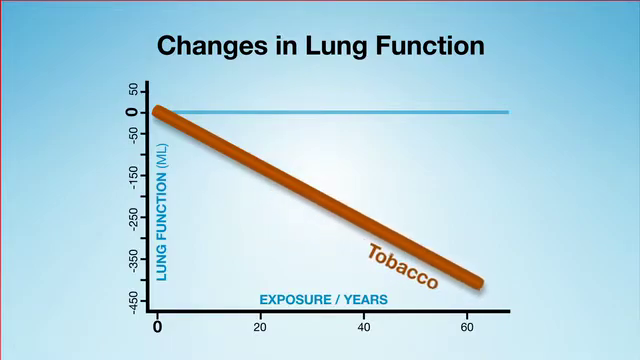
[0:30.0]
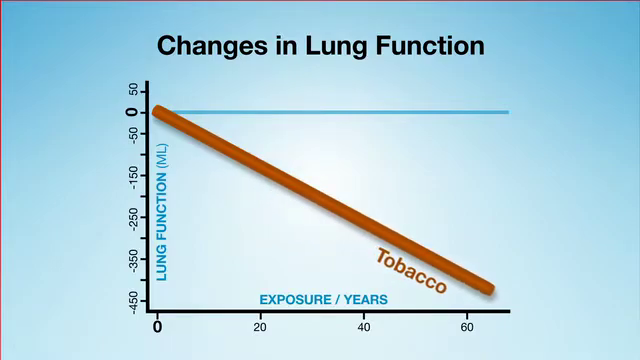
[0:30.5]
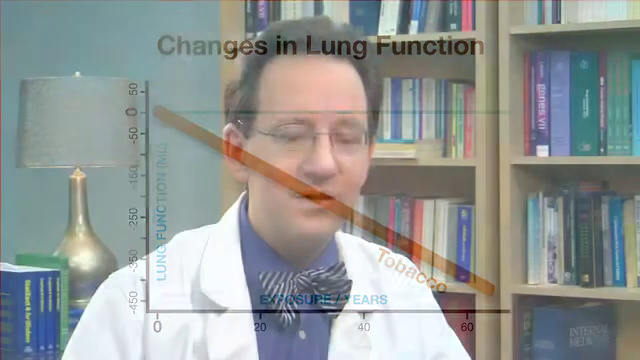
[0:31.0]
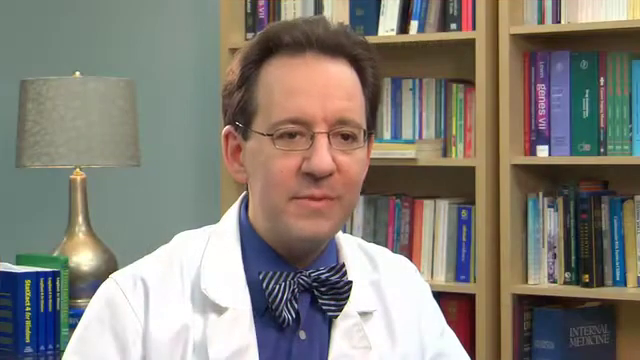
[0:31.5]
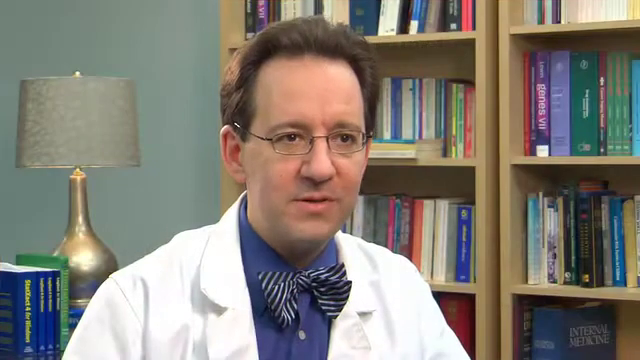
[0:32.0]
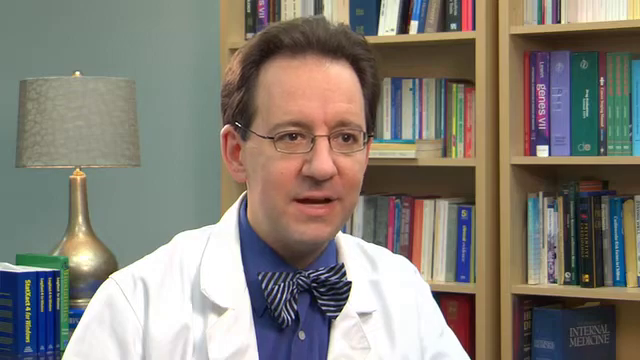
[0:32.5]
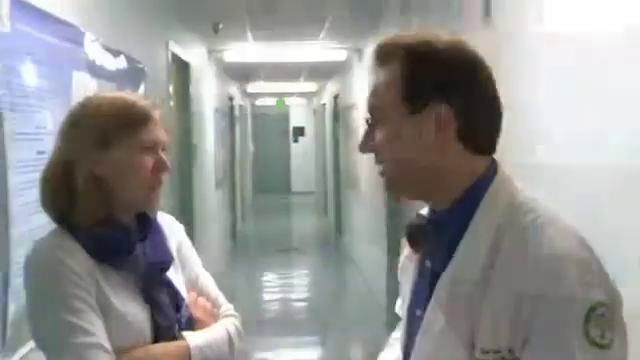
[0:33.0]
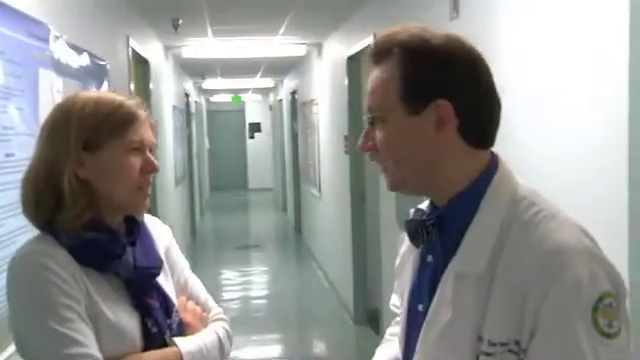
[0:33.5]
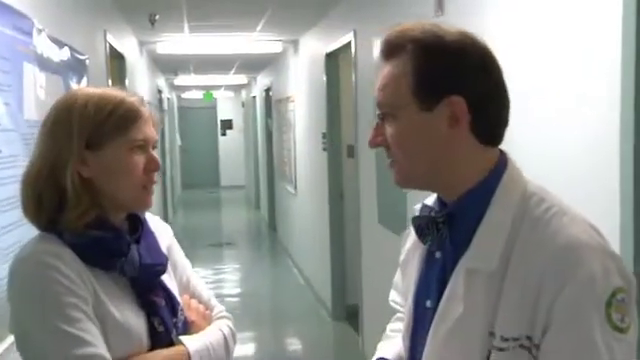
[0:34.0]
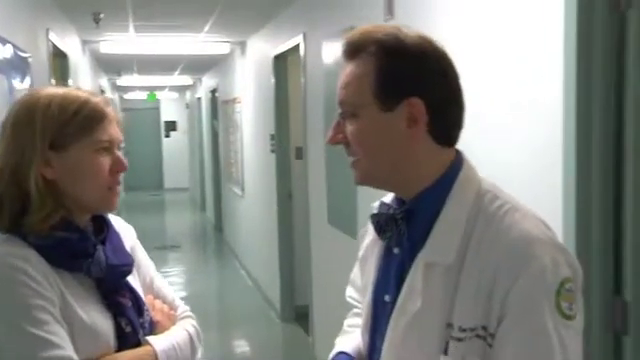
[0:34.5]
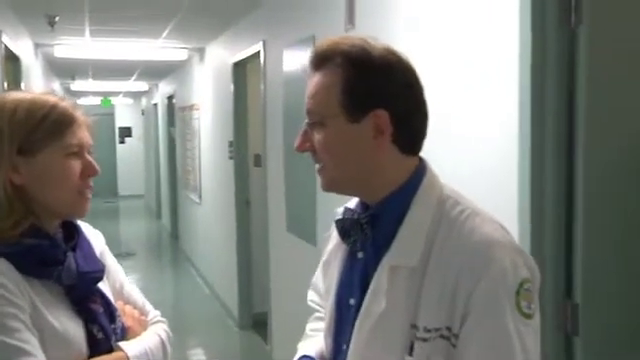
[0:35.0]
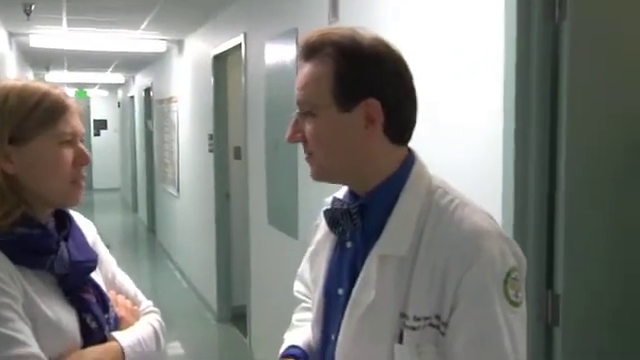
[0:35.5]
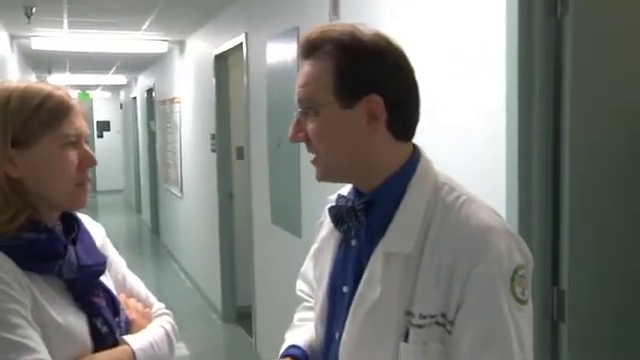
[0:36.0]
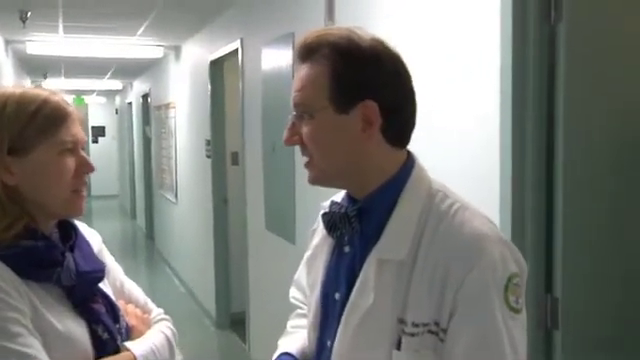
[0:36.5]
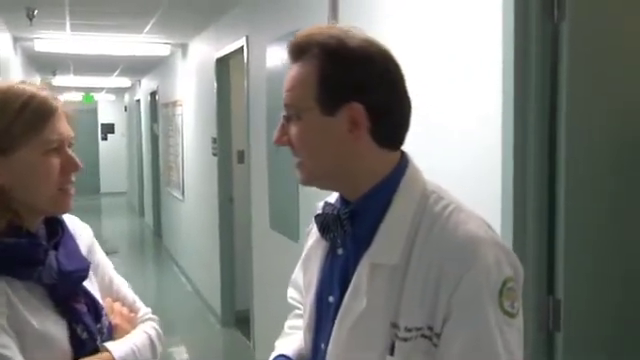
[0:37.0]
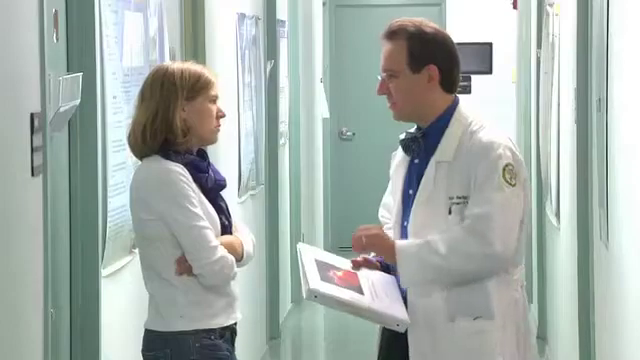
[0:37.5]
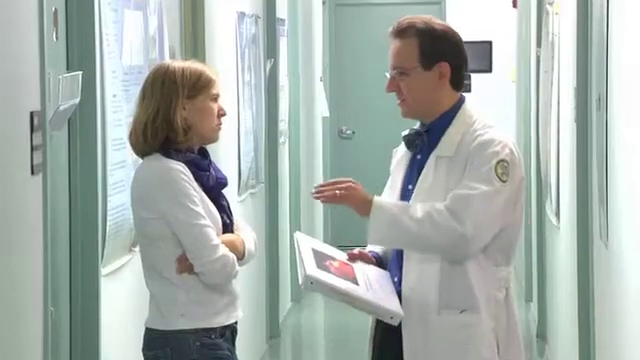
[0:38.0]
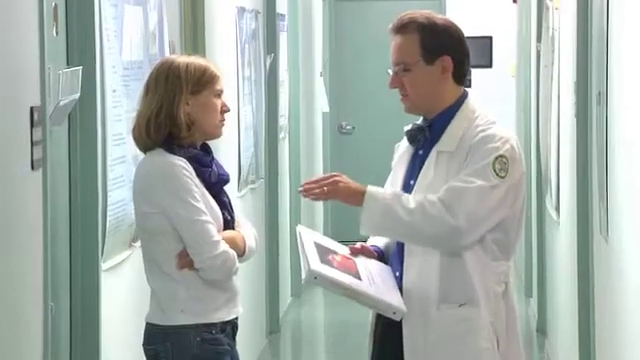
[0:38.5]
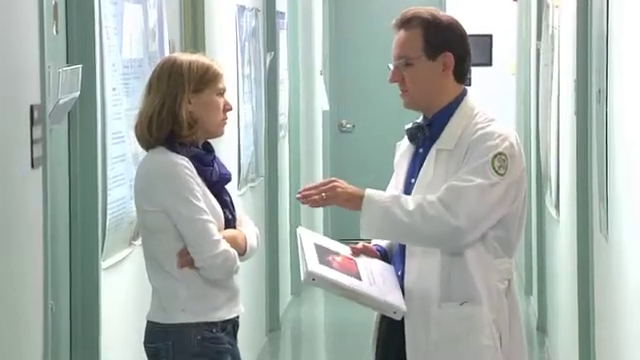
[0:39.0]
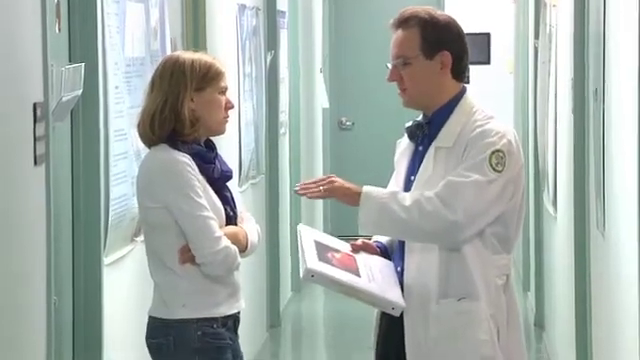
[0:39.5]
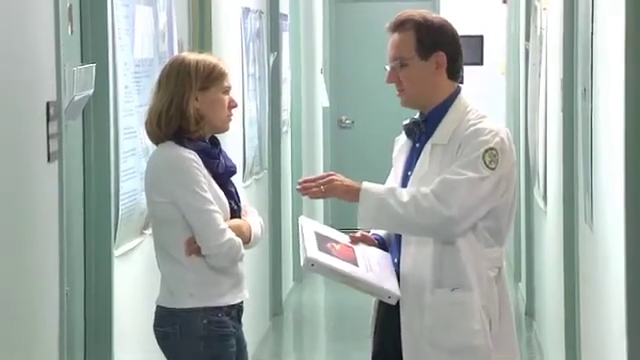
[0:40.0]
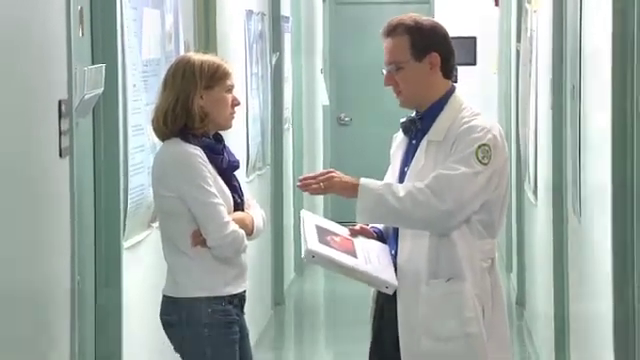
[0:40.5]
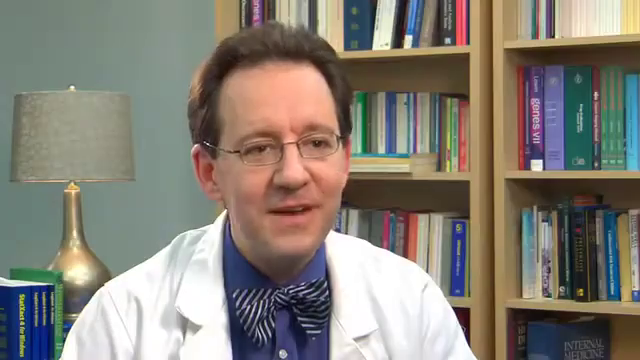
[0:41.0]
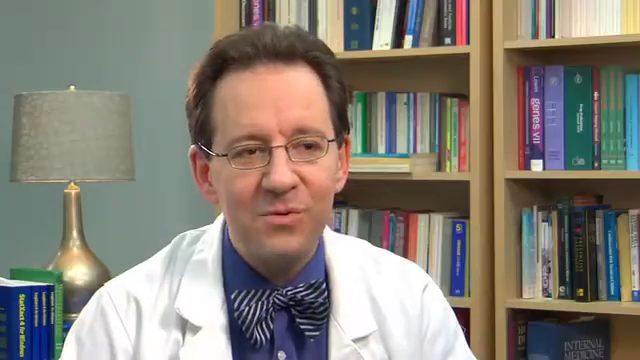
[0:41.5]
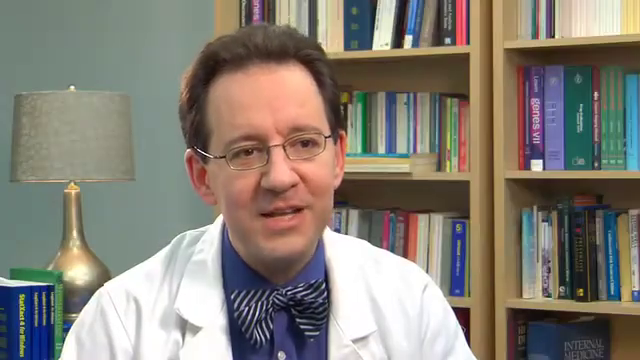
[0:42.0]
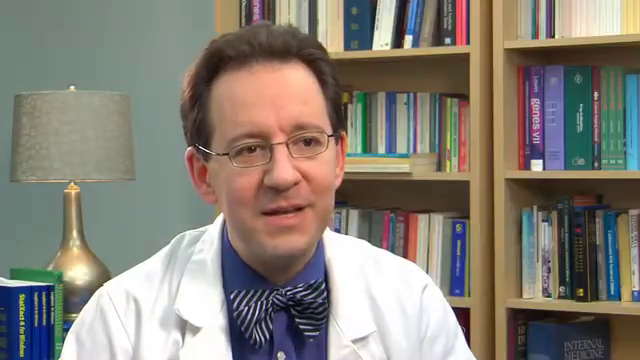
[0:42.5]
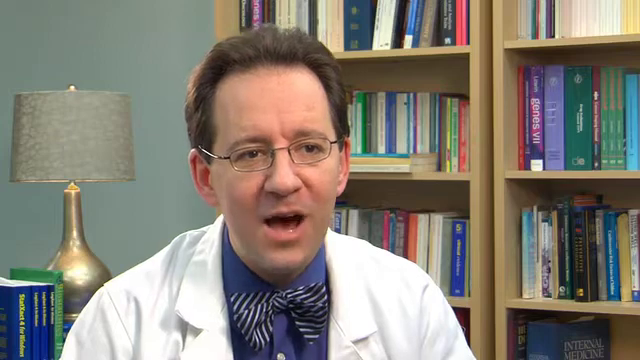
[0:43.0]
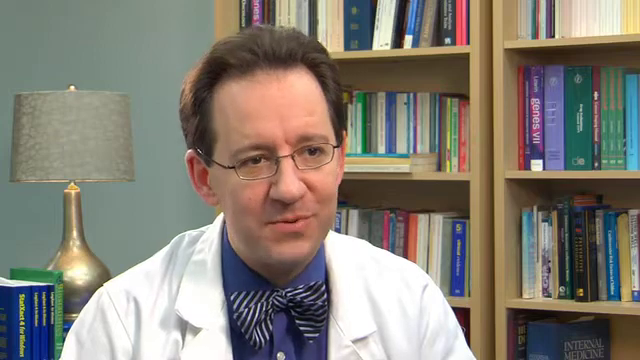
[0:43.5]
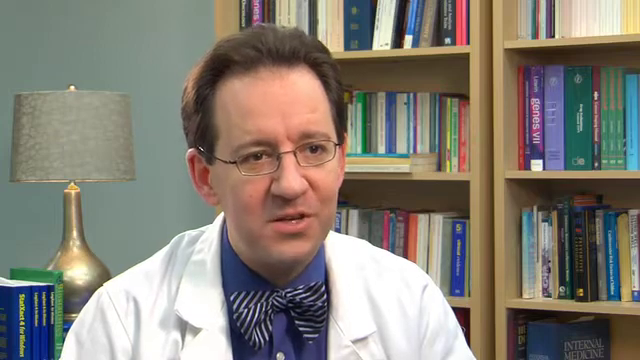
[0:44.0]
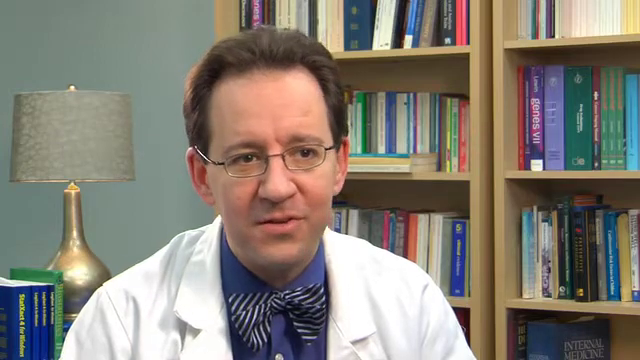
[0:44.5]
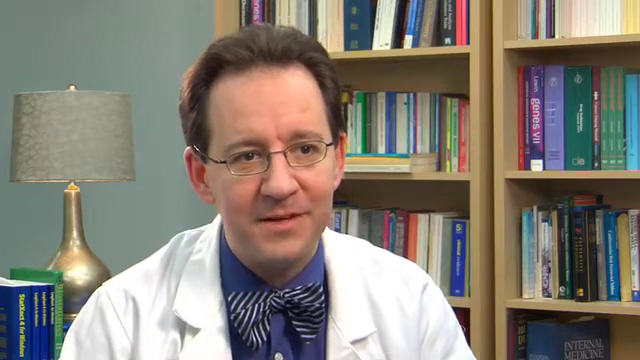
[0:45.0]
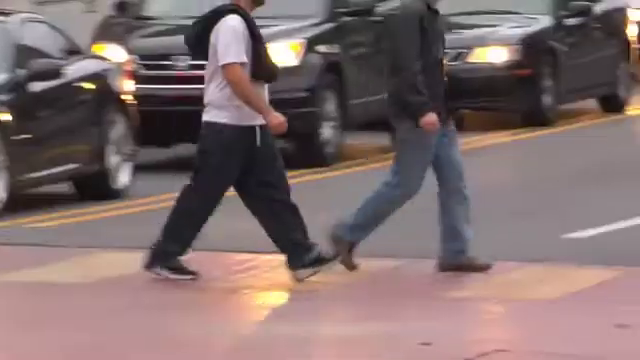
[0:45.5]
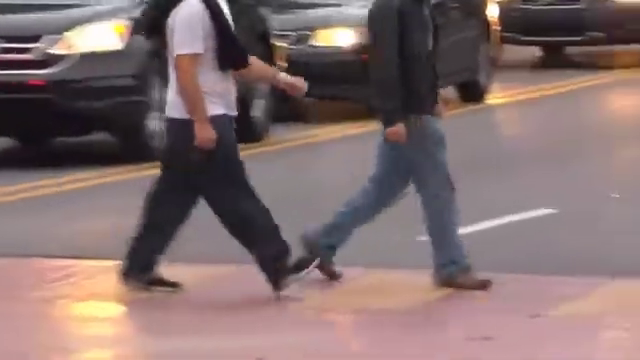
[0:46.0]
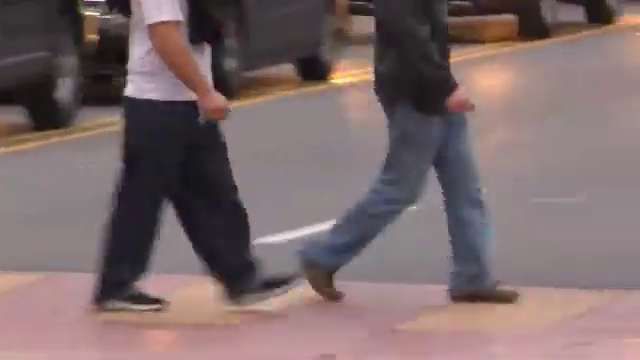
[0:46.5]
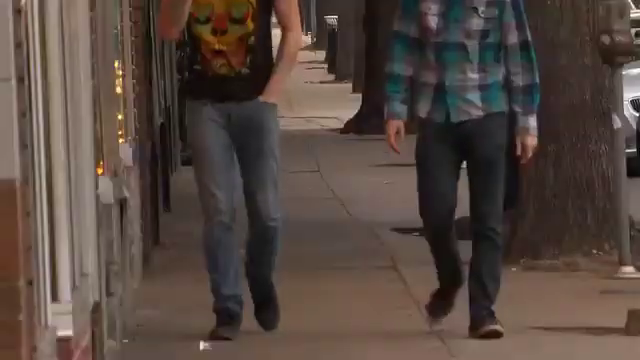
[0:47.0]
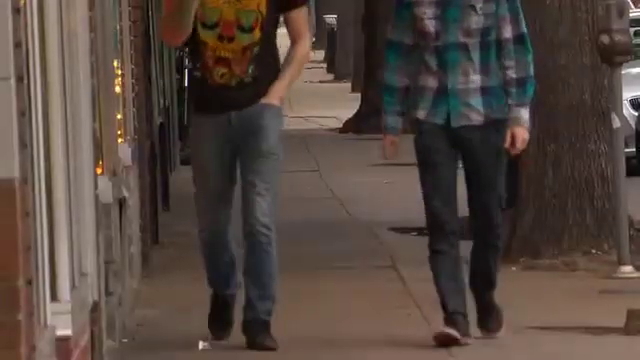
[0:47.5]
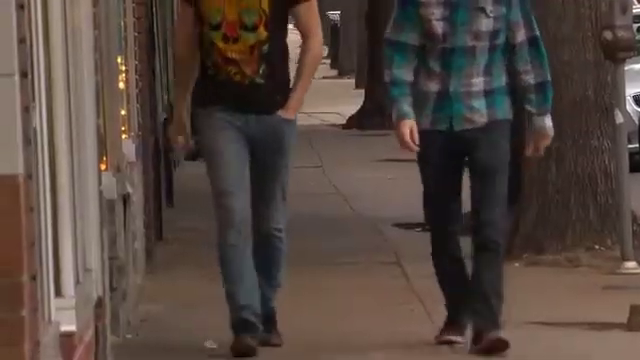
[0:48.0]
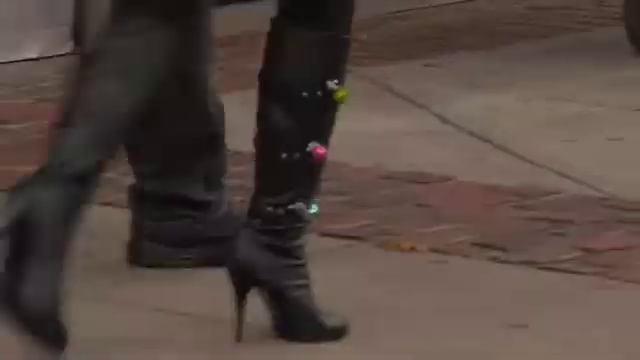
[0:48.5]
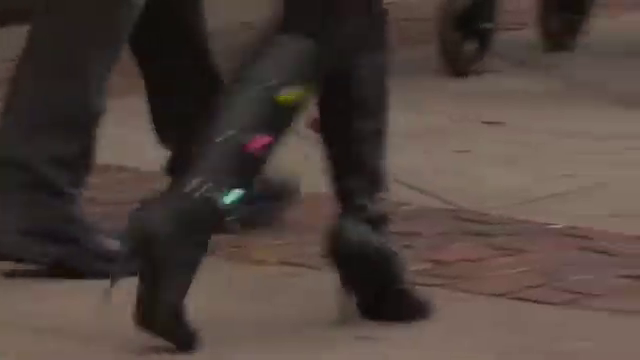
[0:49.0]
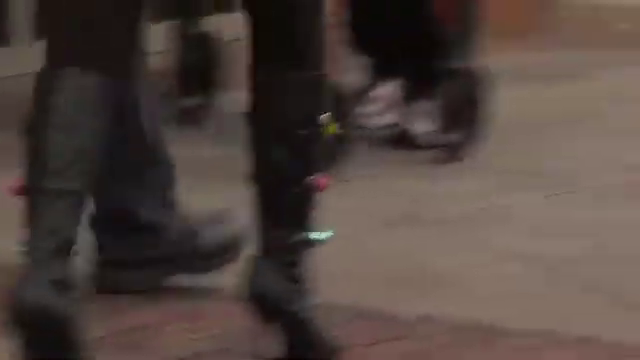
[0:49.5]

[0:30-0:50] A light blue screen sort of has a gradient effect, looking lighter toward the center, almost white. Toward the top of the screen are the words "changes in lung function" written in black. A slanted tan line goes across the screen, and underneath it the word "tobacco" is written, also in tan. A chart, or more like a graph, is on the screen, made up of two black lines that intersect and a blue line extending from the zero position. Next, a doctor sits in his office, looking straight ahead at the person interviewing him as he speaks. He has dark hair and wears wire-rimmed glasses, a white lab coat and a blue and white striped bow tie. Two large bookcases are on the right side of the room, each with at least four shelves.